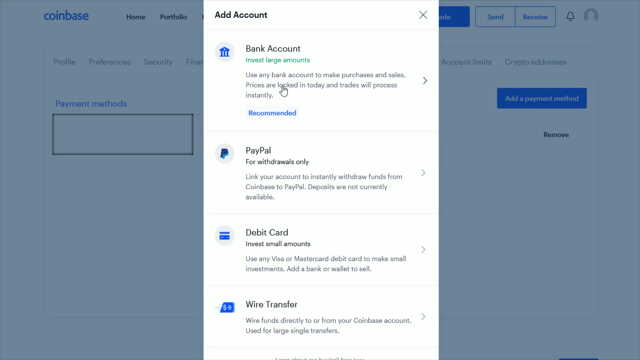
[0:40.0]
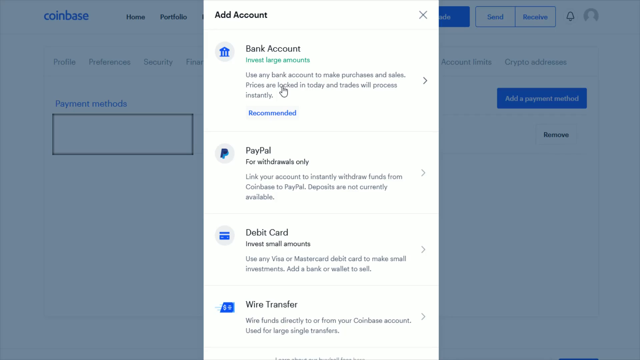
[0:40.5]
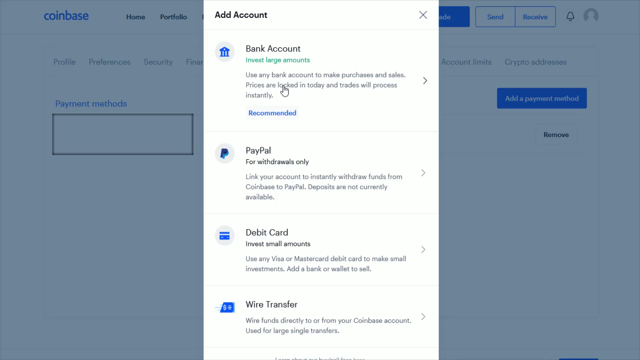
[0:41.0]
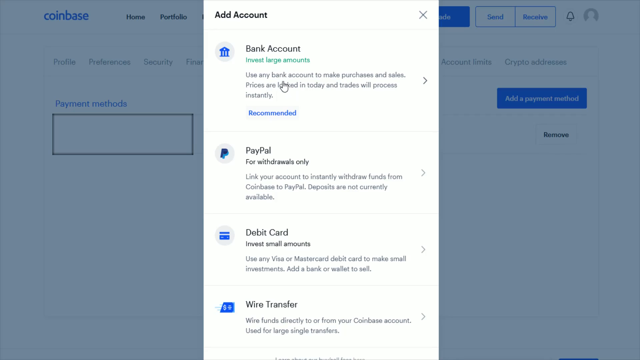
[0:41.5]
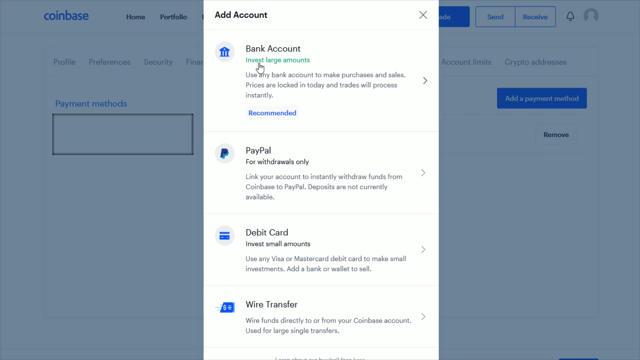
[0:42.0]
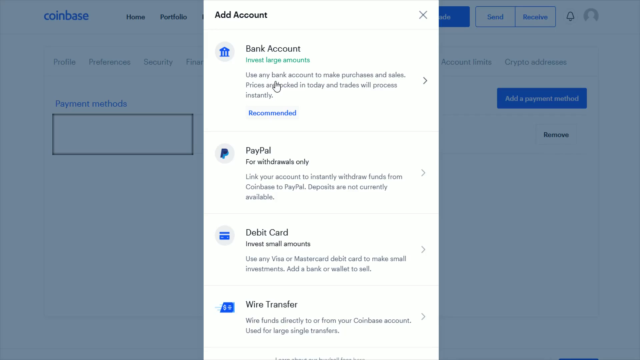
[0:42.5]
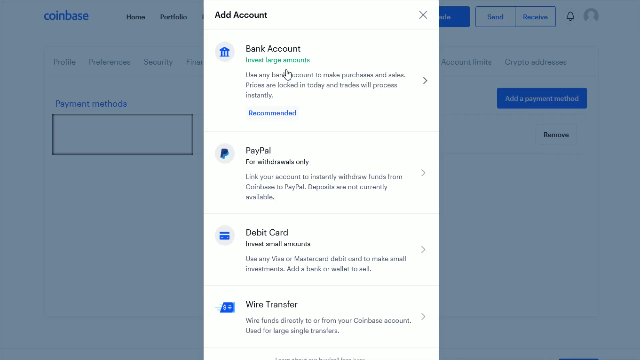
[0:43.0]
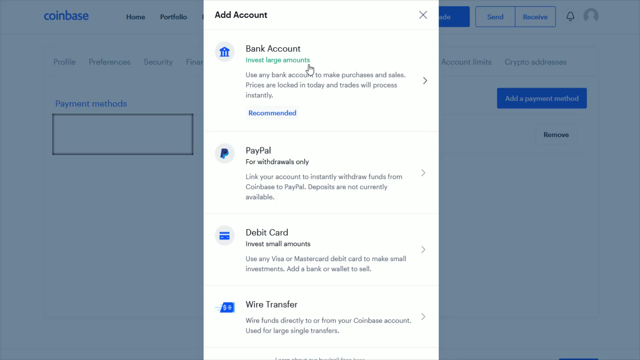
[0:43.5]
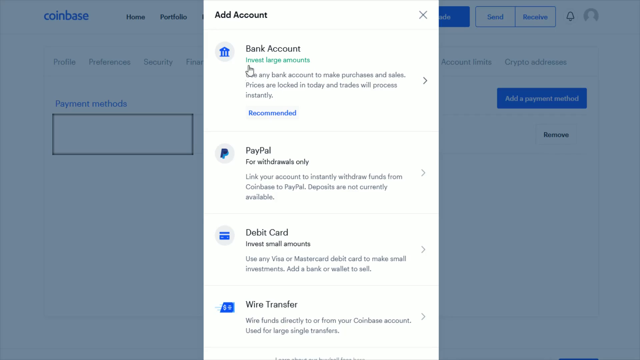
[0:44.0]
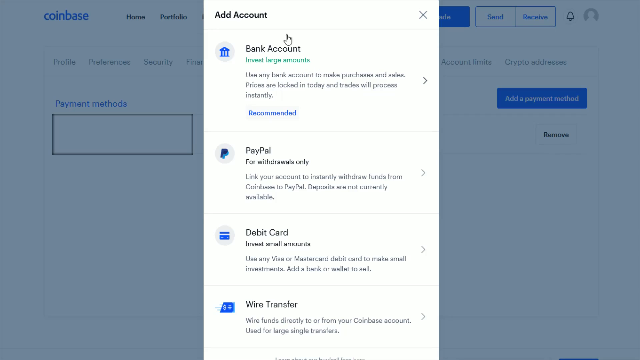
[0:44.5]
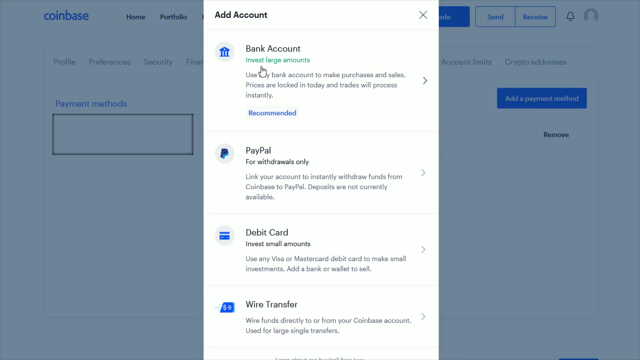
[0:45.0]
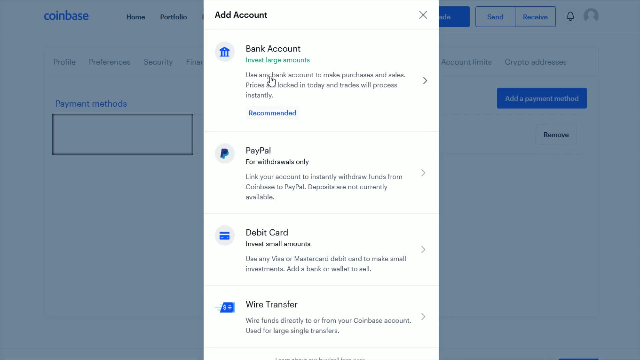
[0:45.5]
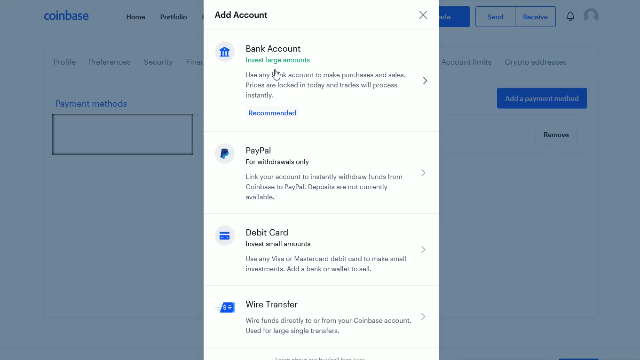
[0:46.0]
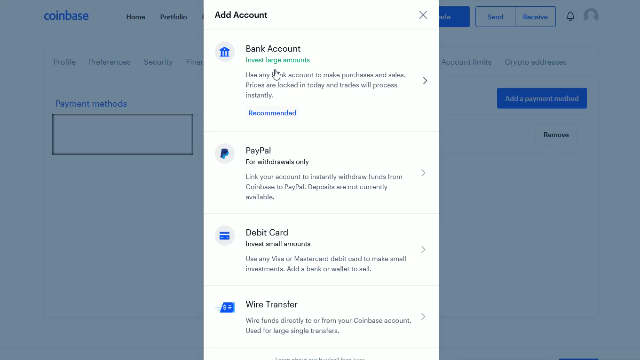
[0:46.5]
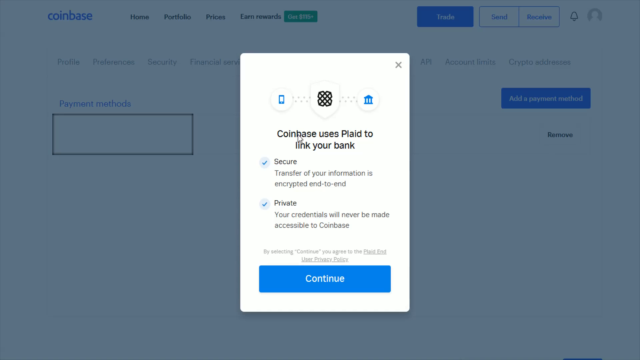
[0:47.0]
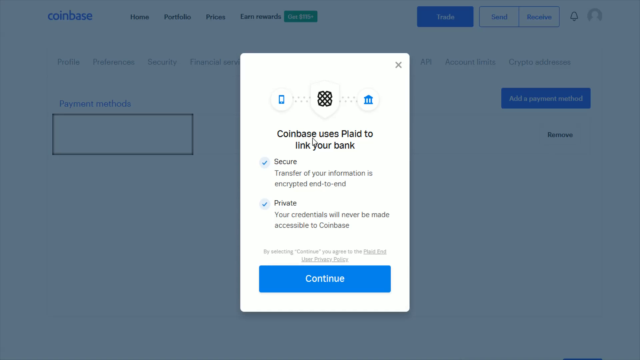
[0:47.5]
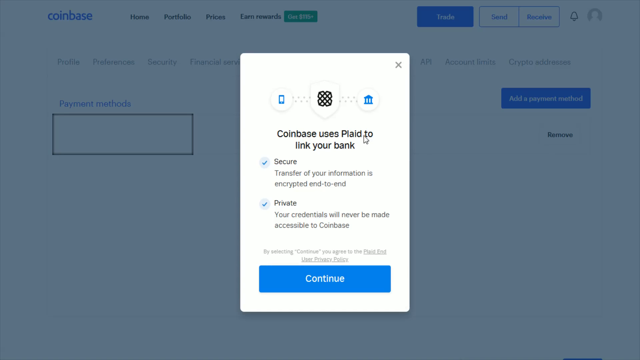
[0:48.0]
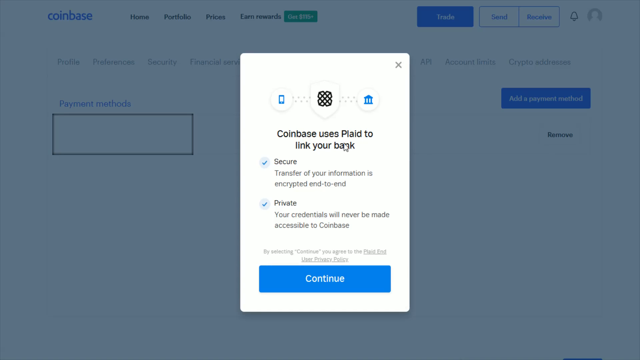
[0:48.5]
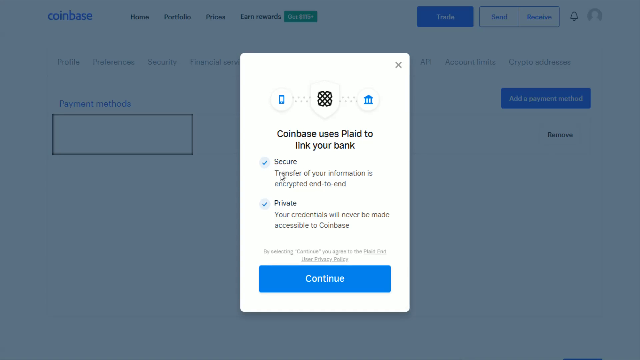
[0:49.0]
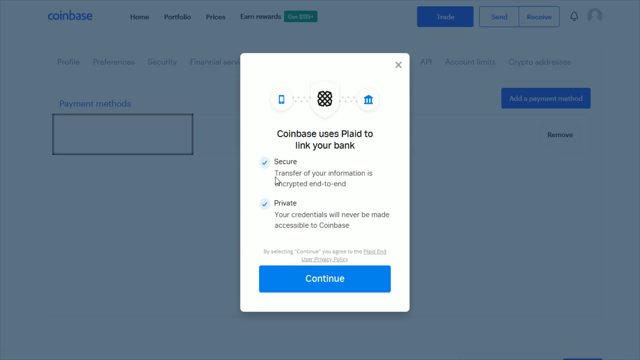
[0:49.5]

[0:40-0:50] The bank account option is clicked after the cursor hovers around it, leading to another pop-up with directions on how to use the link option for the account. It indicates that the connection is secure and private and asks whether to continue. The setting is still a screen recording of Coinbase on a desktop, with a white background and many blue titles.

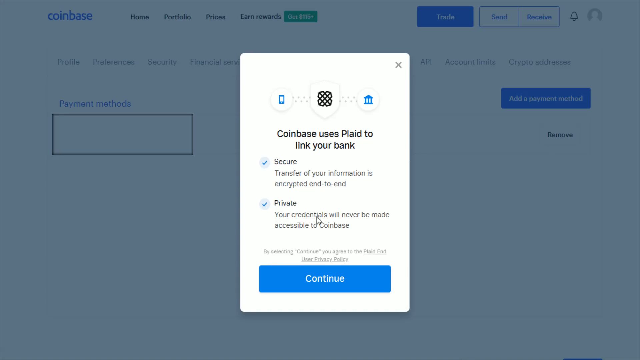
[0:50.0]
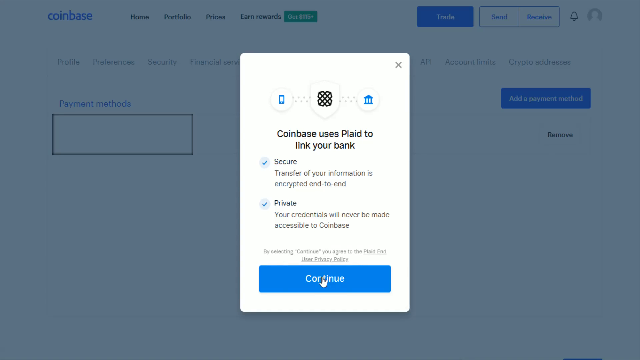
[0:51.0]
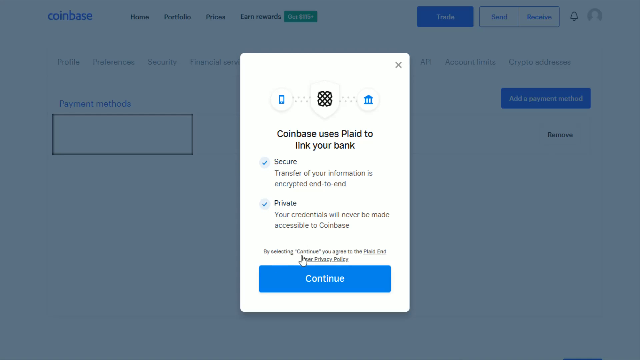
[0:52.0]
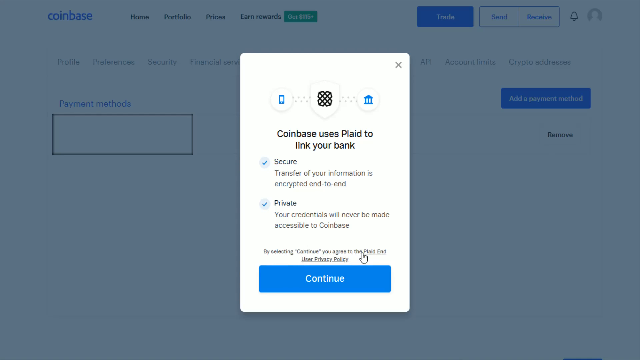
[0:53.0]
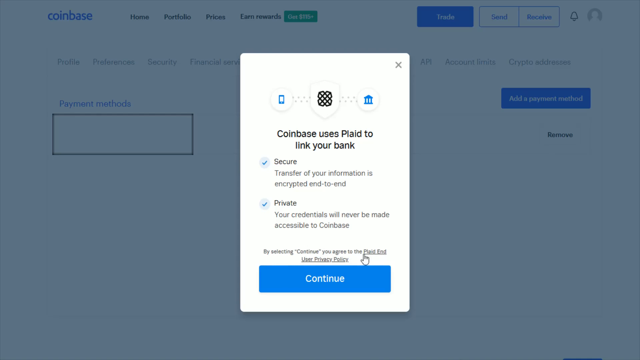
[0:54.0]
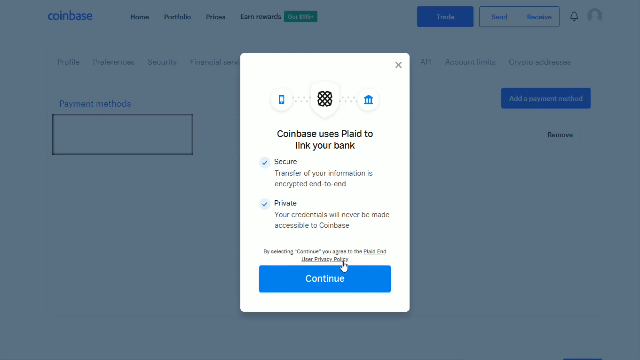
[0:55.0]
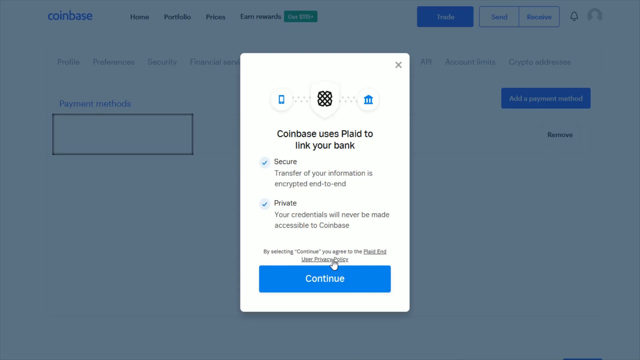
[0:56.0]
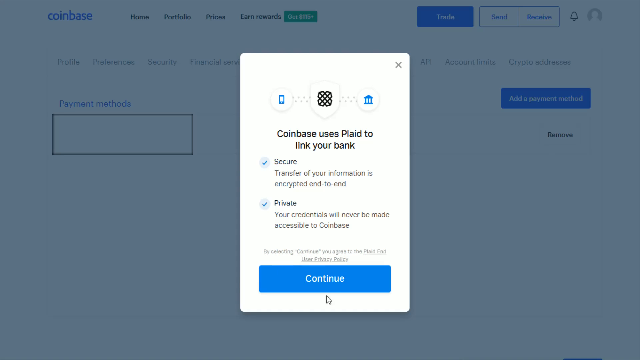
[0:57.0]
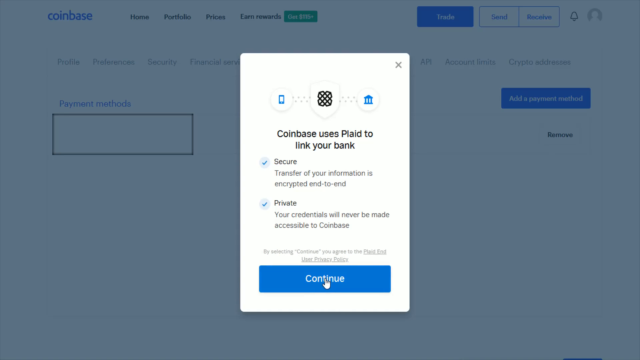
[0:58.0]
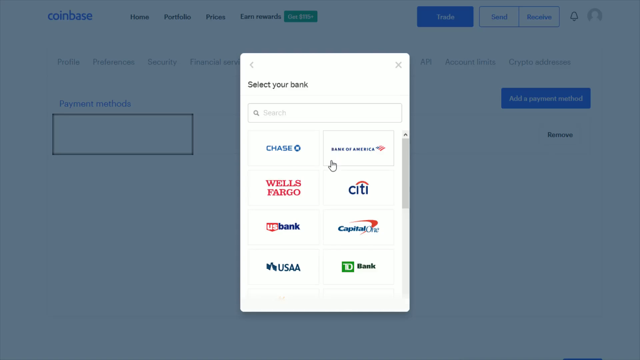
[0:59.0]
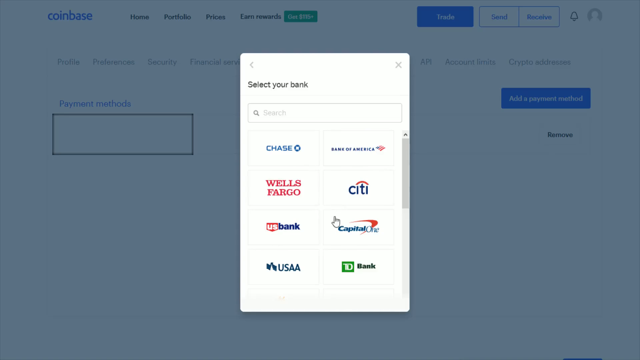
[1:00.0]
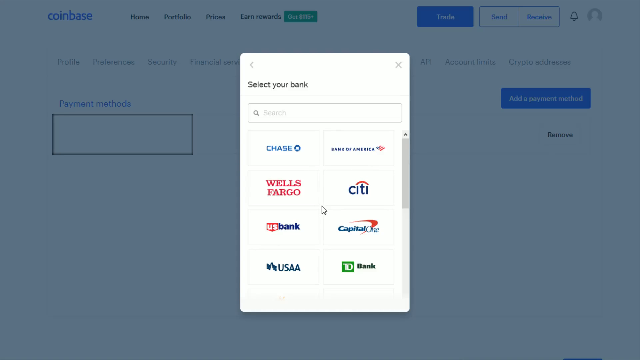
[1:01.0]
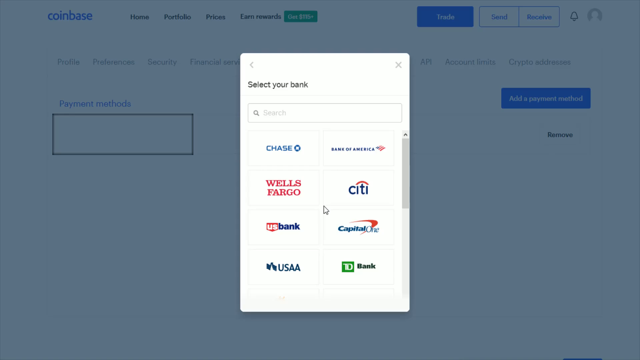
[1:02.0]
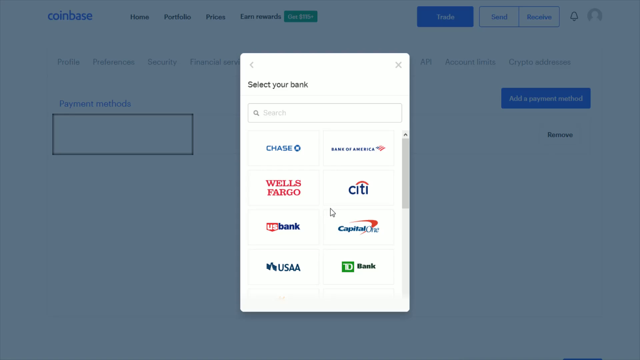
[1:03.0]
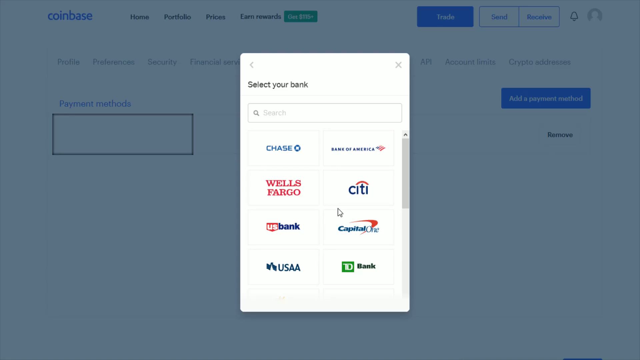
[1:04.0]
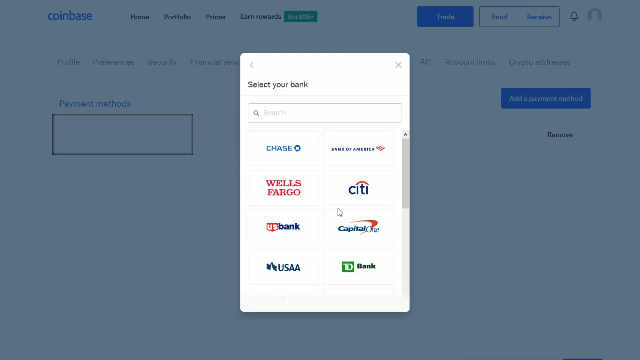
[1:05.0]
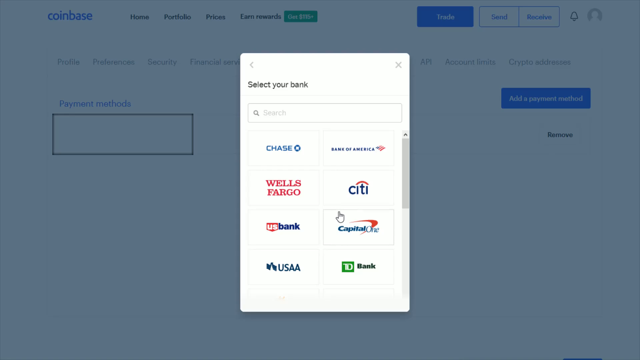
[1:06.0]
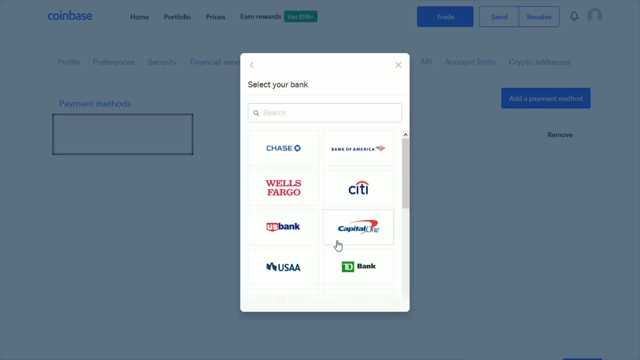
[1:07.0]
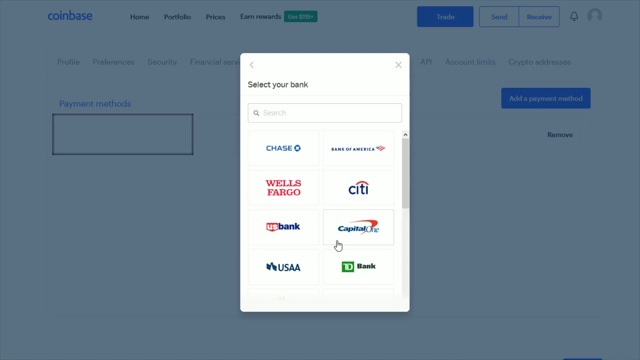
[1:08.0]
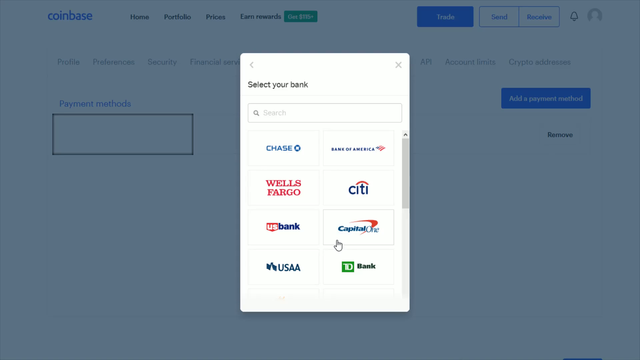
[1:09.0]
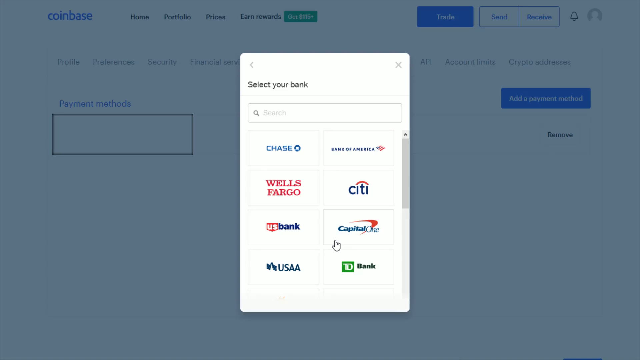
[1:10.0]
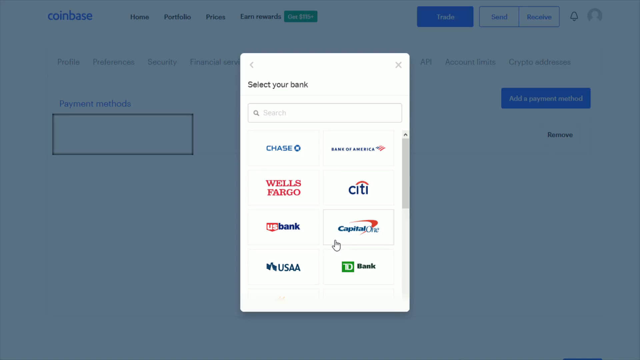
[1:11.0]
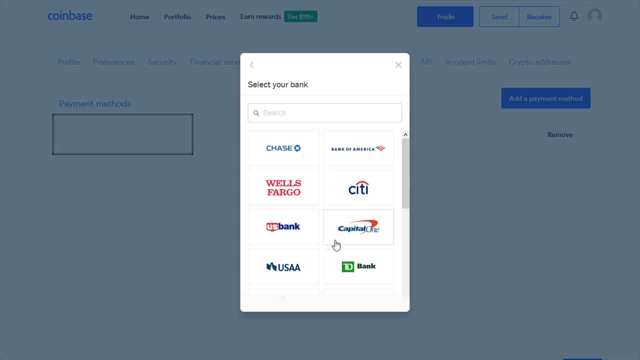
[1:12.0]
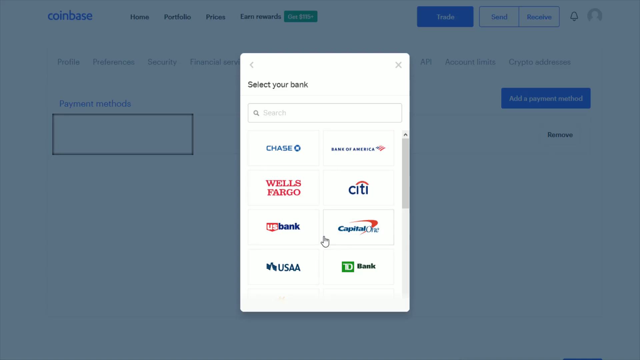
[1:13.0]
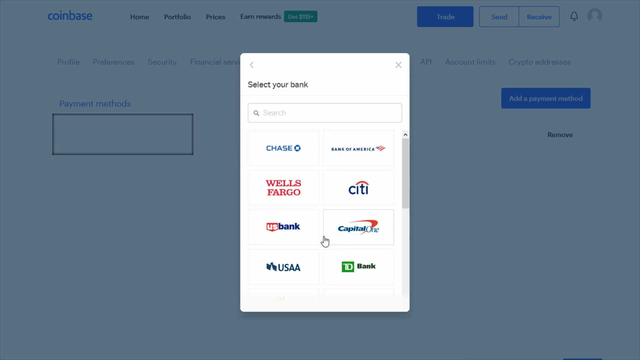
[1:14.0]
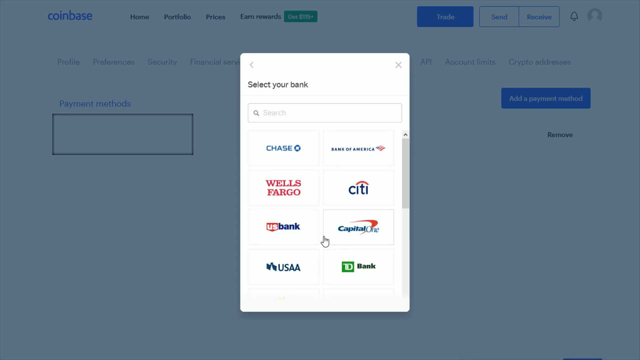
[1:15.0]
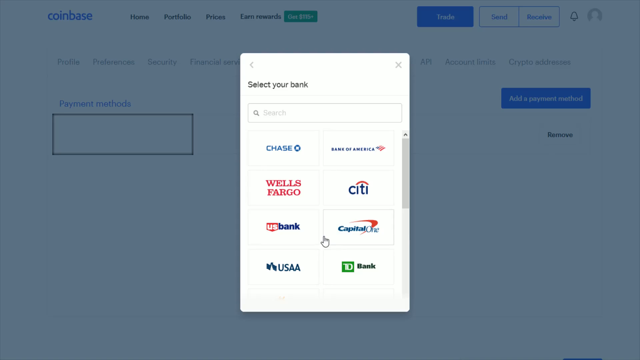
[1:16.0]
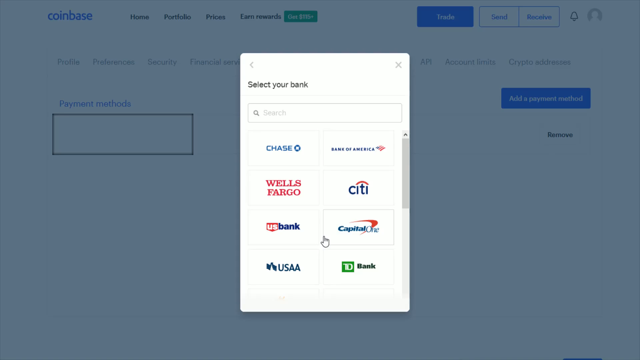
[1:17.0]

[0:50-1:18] The cursor hovers over the Coinbase link instructions for linking a bank account, which read "by selecting continue, you agree to the user end policy." Continue is clicked, and eight different bank options and more appear. Scrolling down shows Chase, Bank of America, Wells Fargo, Citi, U.S. Bank, Capital One, USA and T.D. Bank, and the cursor hovers over the different bank options. The setting remains the same screen recording of Coinbase.